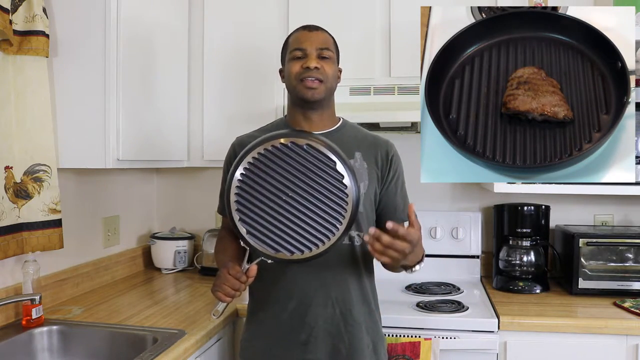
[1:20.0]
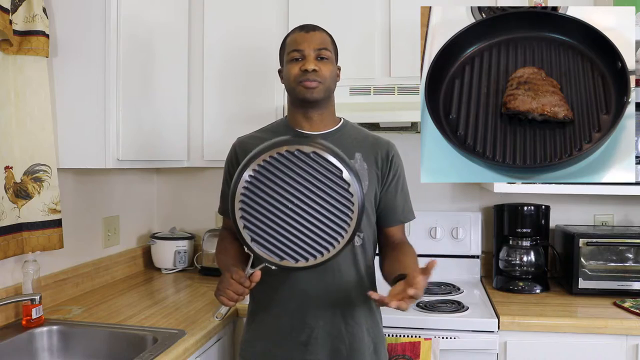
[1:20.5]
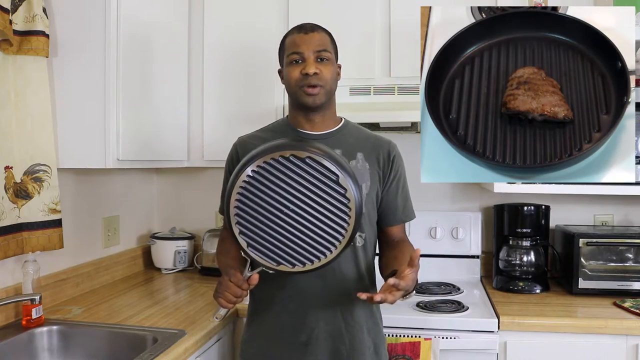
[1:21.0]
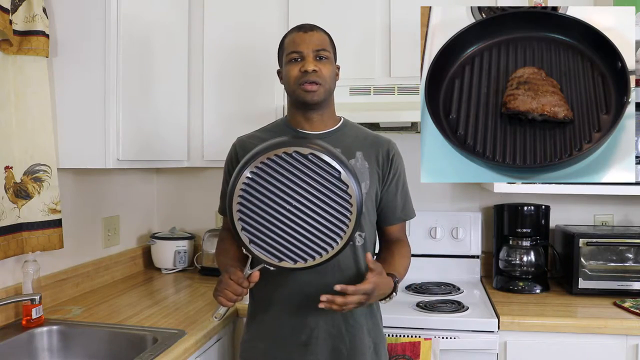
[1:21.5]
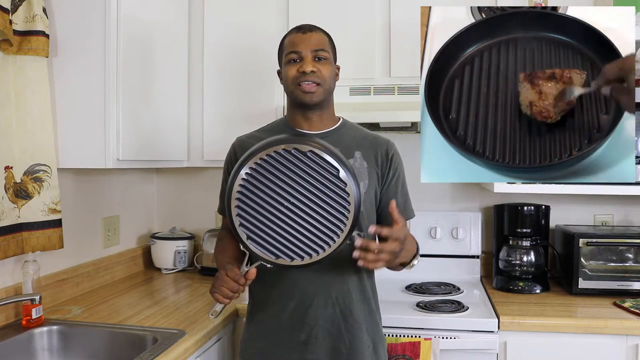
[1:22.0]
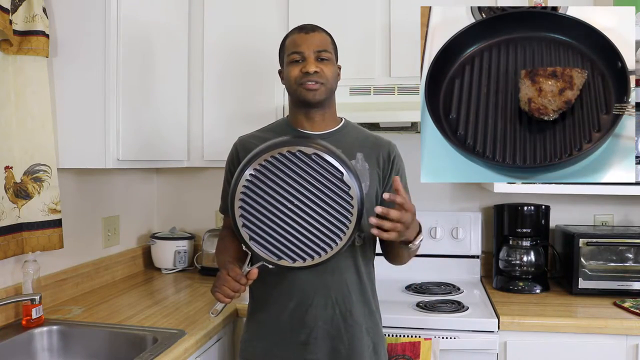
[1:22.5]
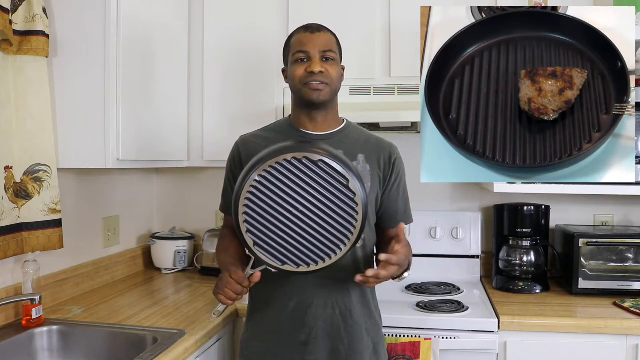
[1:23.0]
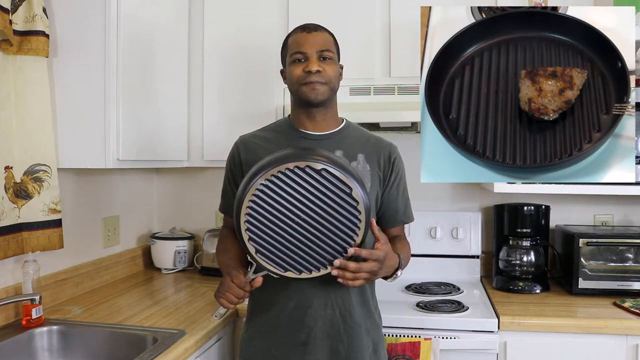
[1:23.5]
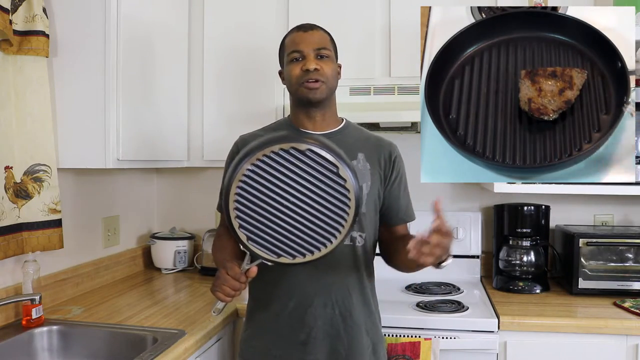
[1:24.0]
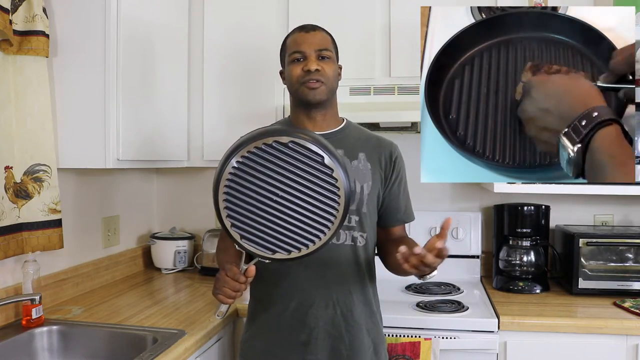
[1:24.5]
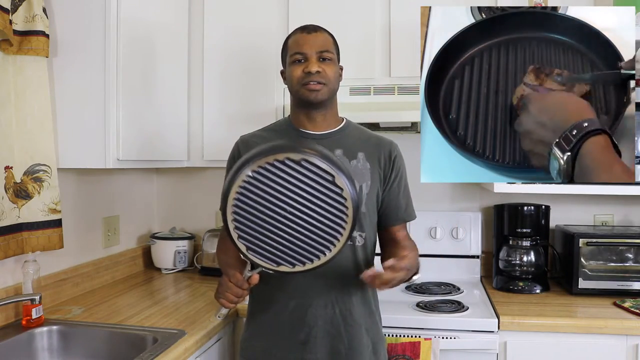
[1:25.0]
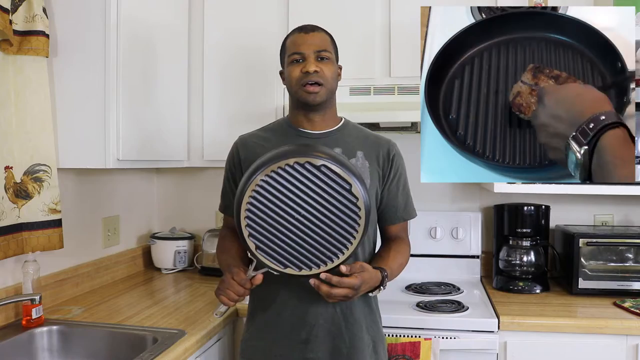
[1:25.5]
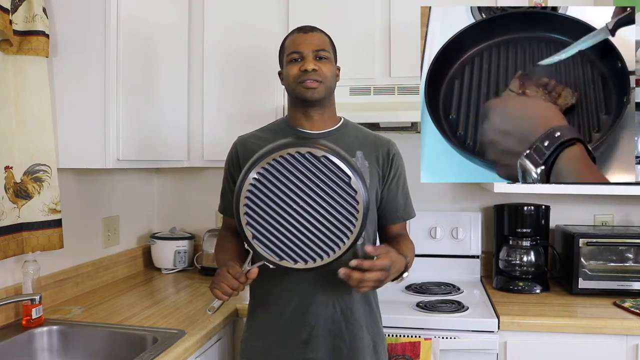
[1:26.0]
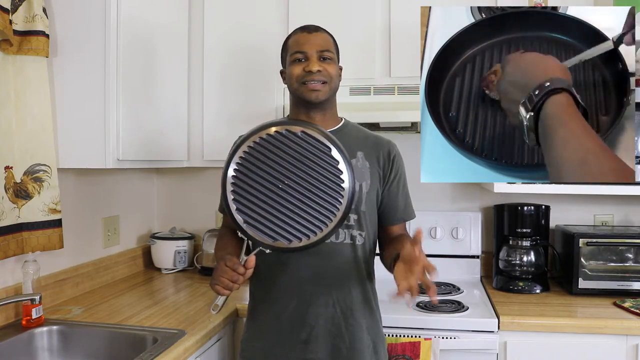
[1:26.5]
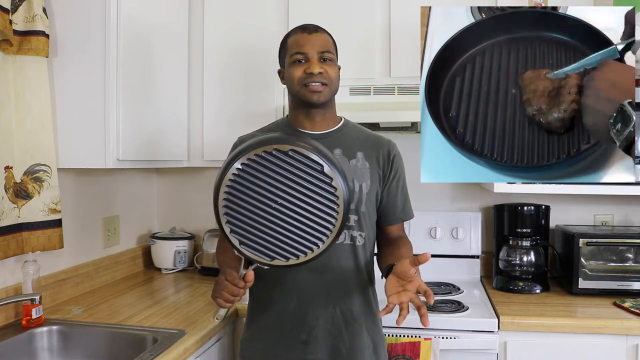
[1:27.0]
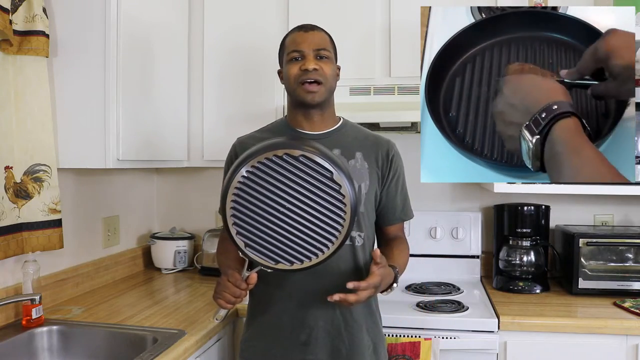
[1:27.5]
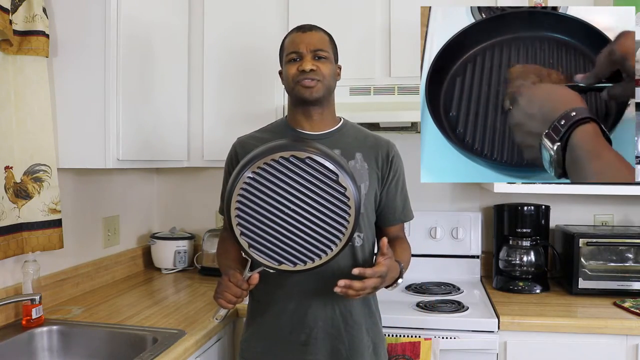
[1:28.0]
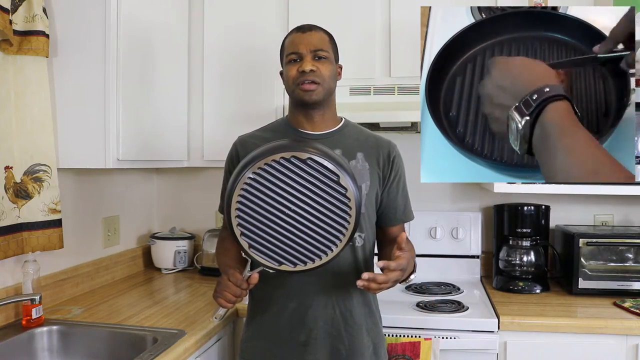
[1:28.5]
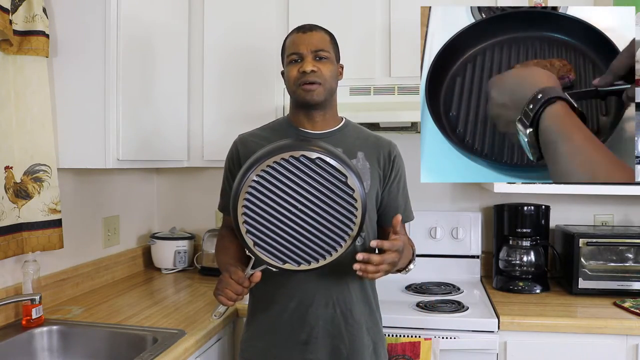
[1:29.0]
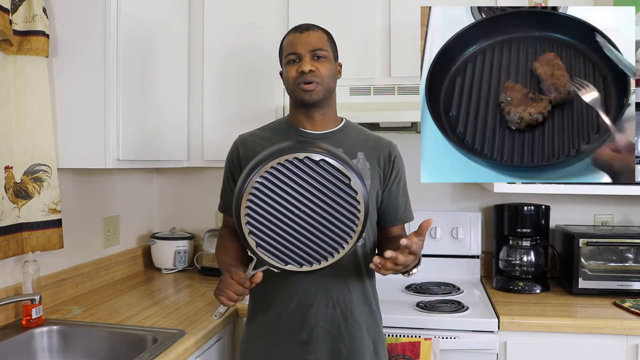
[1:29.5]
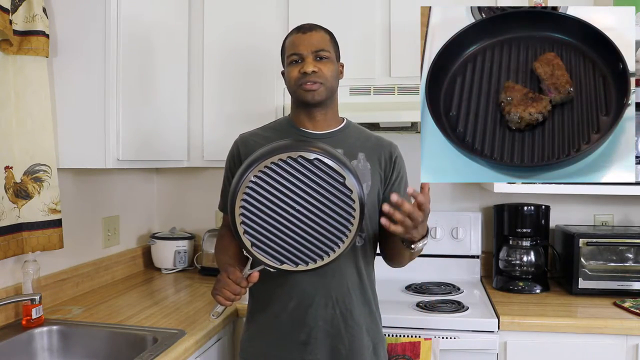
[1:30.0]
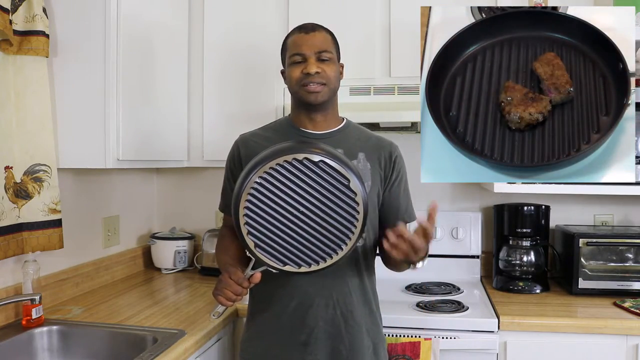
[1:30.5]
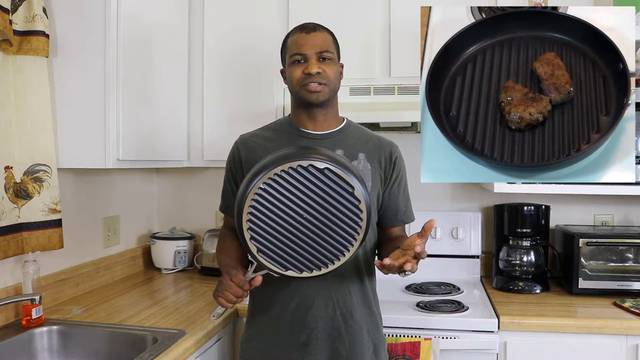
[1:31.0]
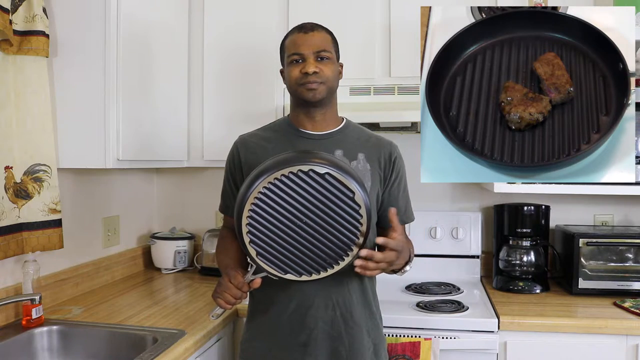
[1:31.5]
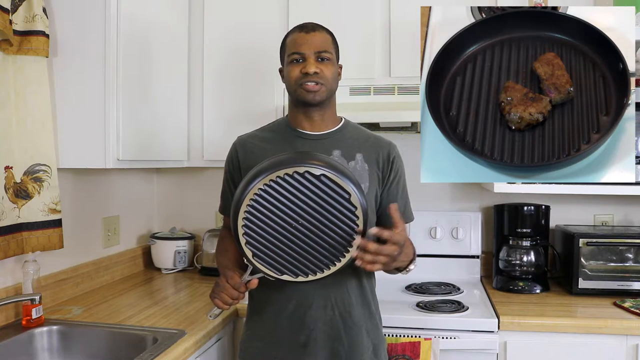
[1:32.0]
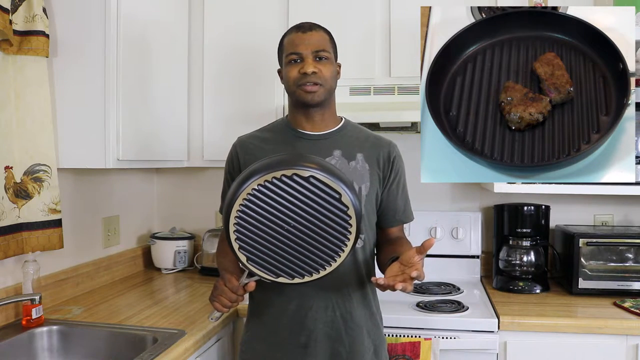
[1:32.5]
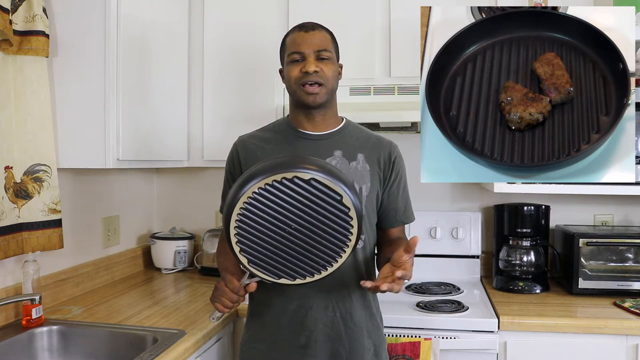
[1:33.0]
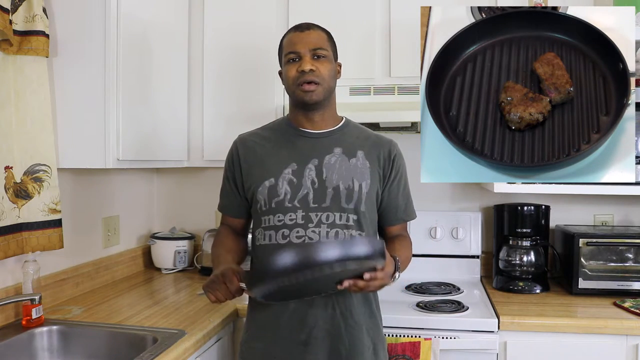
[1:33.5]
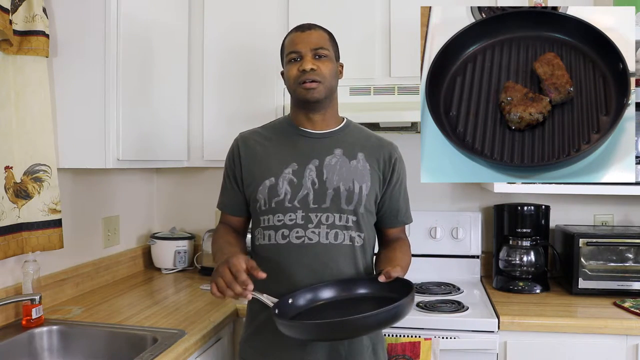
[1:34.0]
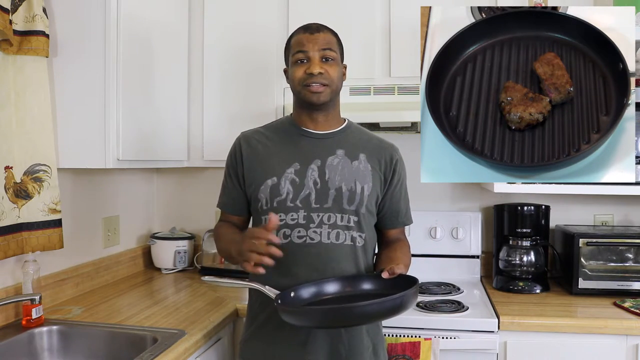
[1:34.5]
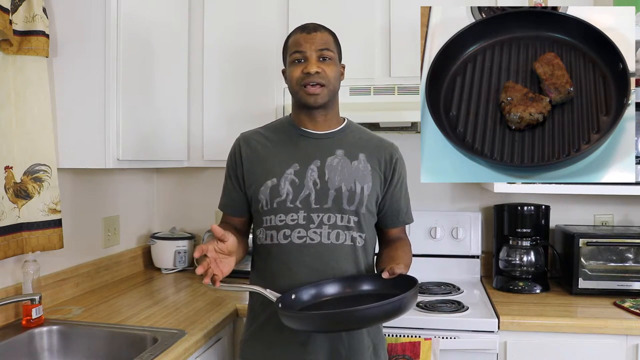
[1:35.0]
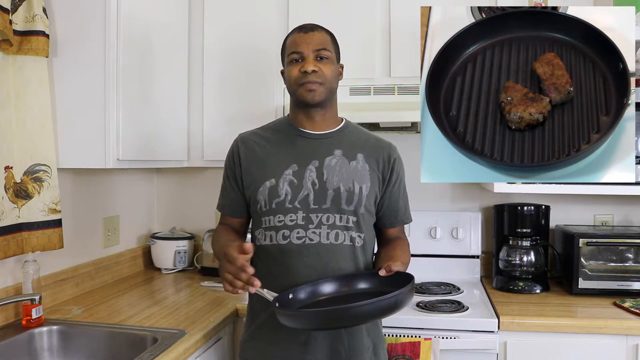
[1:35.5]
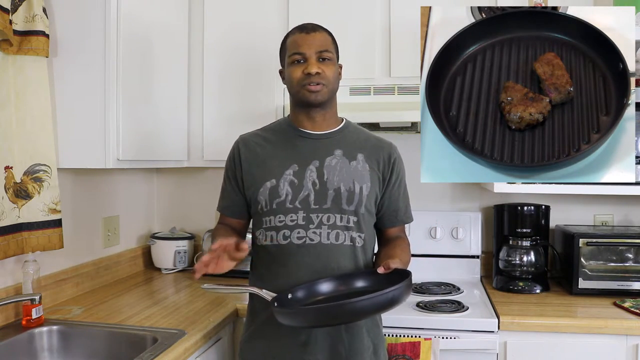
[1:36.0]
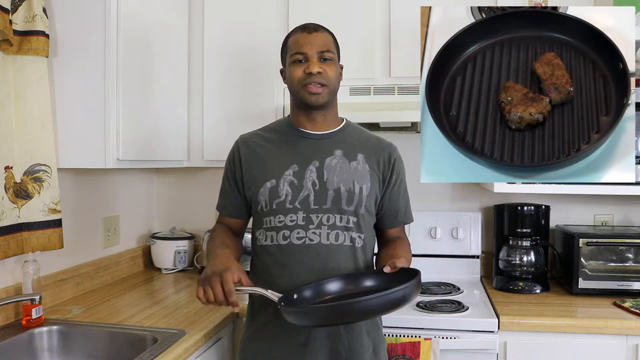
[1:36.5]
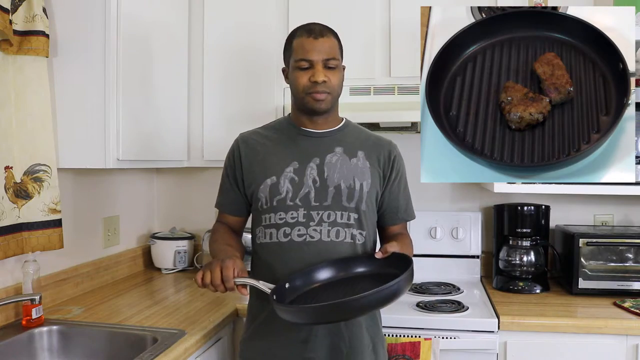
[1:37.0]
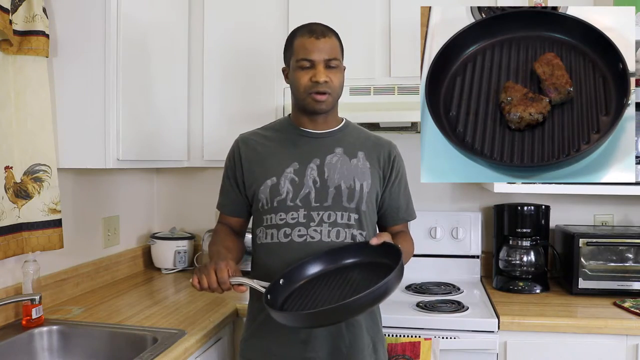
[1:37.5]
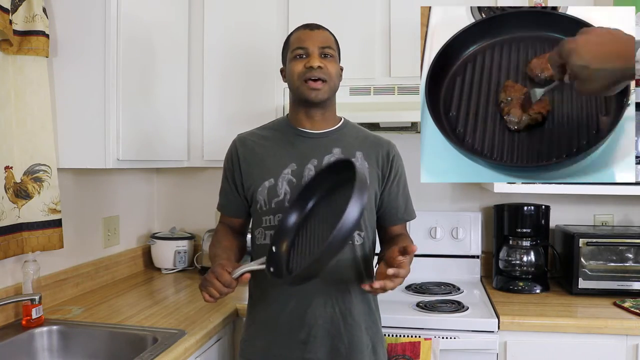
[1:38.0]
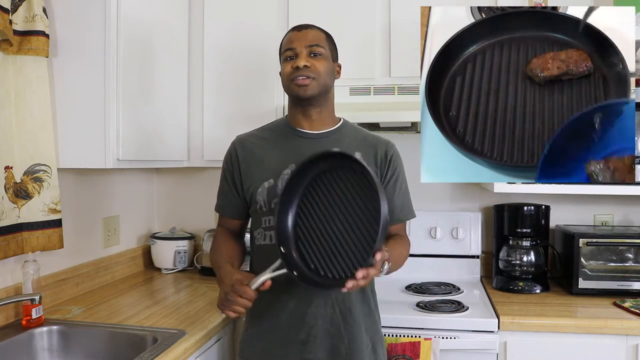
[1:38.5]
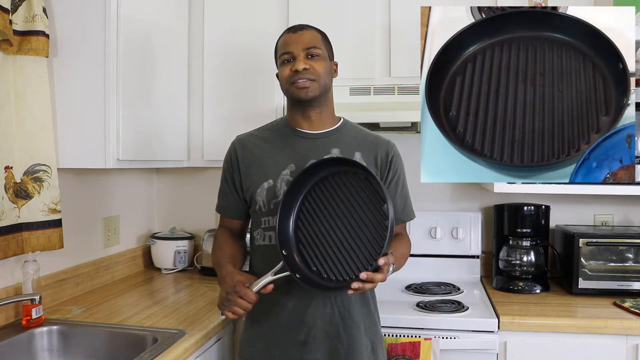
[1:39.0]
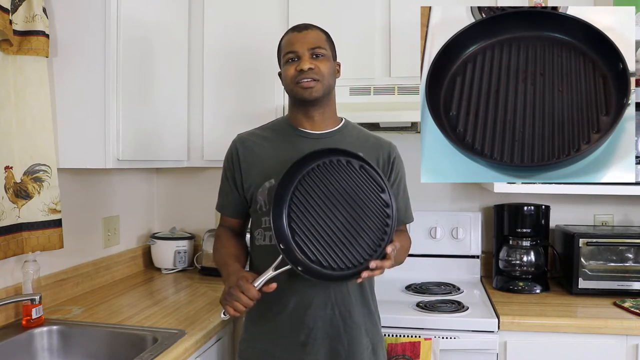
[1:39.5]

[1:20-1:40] The kitchen has wide shelves on the walls, with a counter and a stove below them. The counter has a wooden finish, with a sink on its left side and a black coffee maker on its right side. To the right of the coffee maker is a small black oven, and to its left is a white stove between two parts of the counter. On the left side of the counter are a white rice cooker and, to its right, a toaster with a reflective metal surface. The man in the middle talks directly to the camera. A smaller video in the top right of the frame demonstrates how the pan cooks a piece of steak.